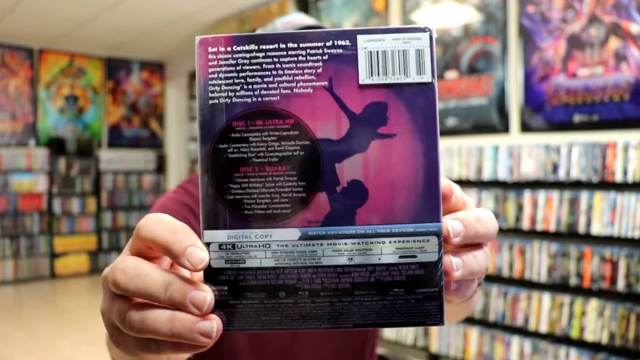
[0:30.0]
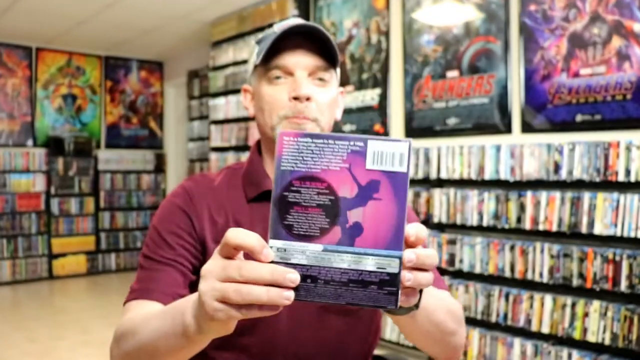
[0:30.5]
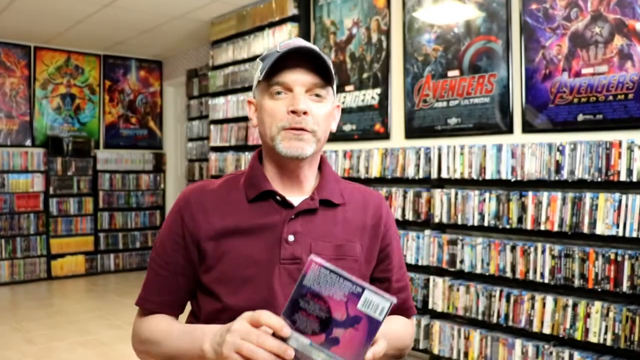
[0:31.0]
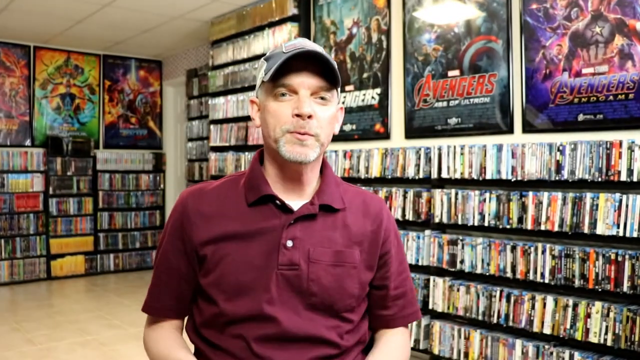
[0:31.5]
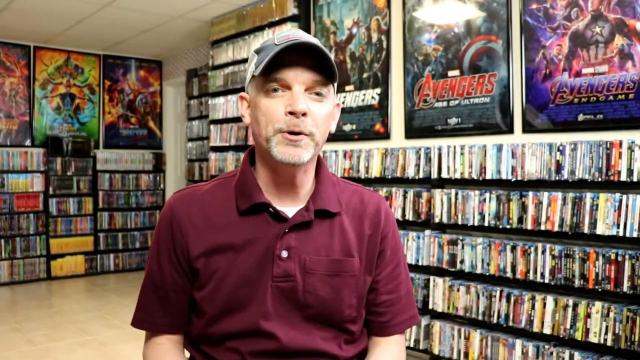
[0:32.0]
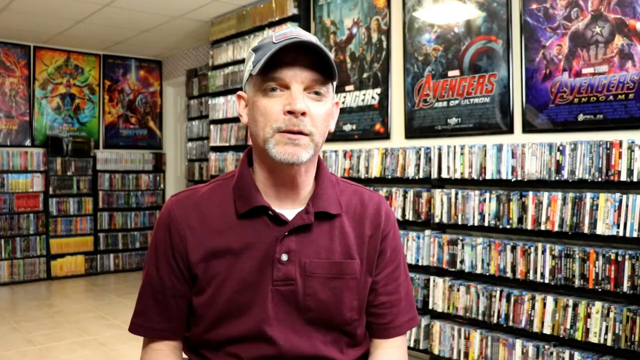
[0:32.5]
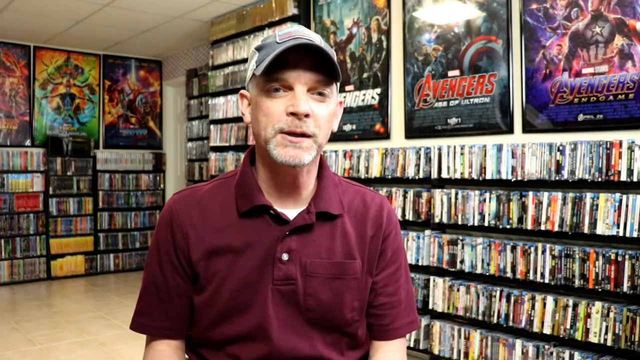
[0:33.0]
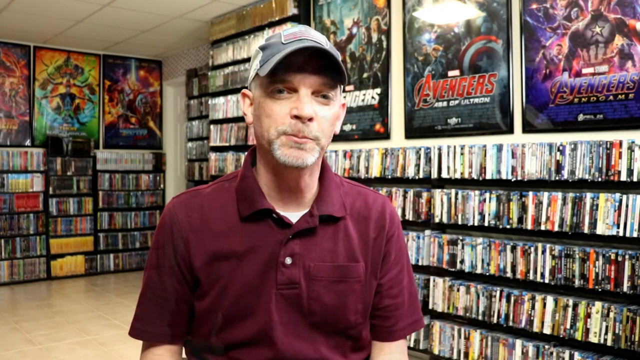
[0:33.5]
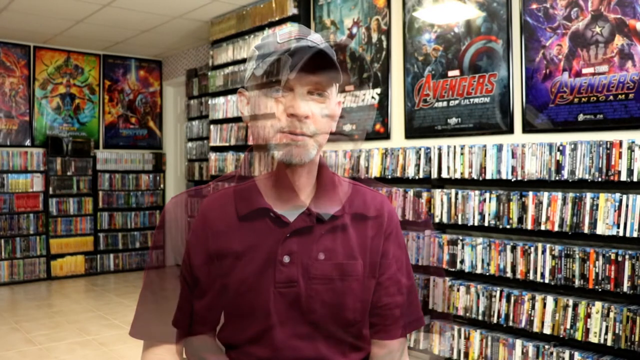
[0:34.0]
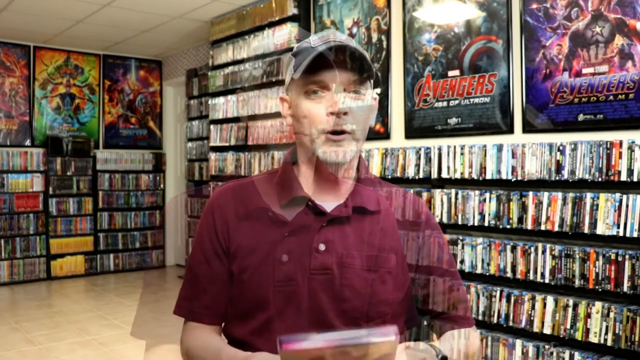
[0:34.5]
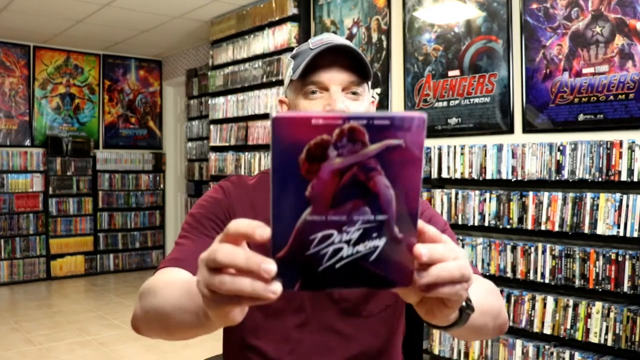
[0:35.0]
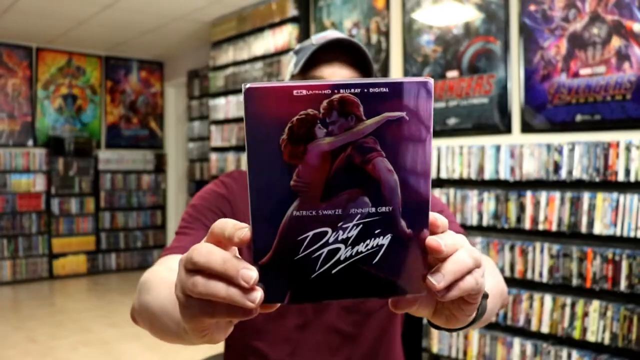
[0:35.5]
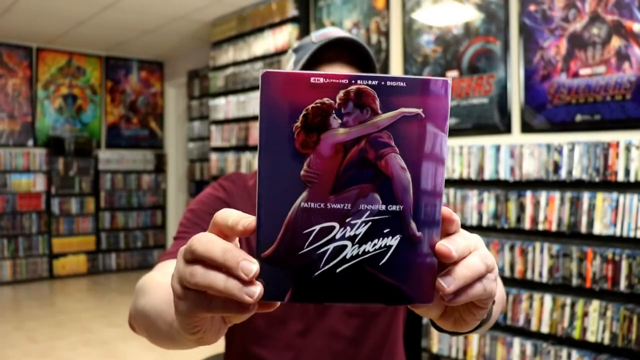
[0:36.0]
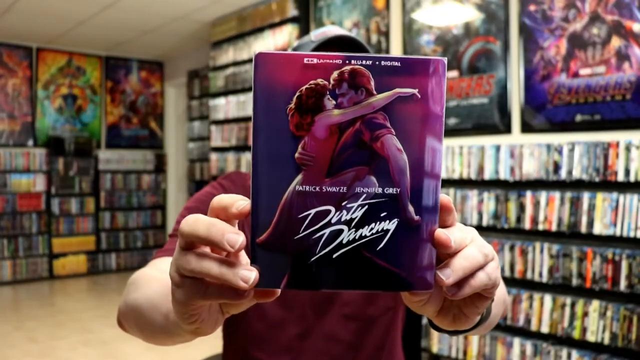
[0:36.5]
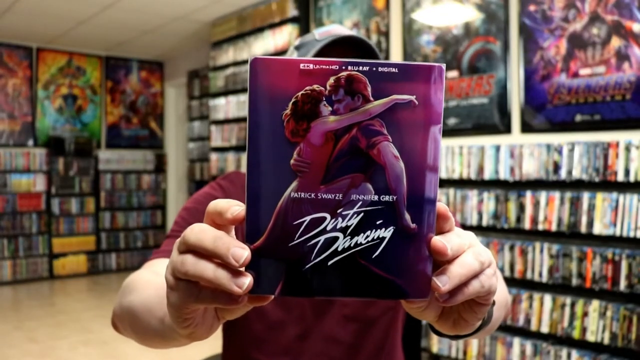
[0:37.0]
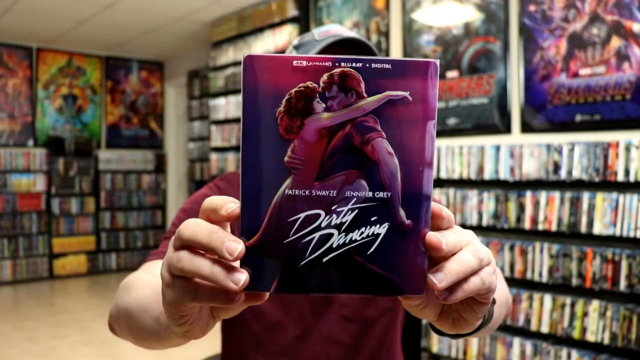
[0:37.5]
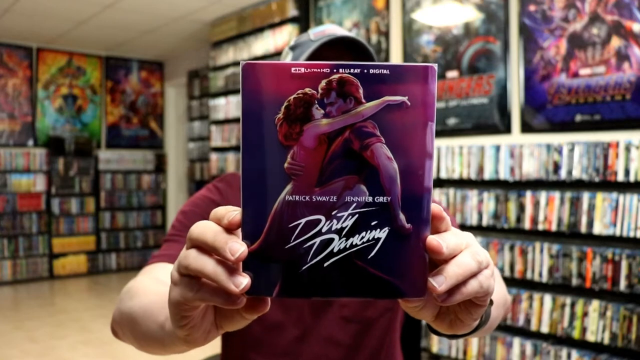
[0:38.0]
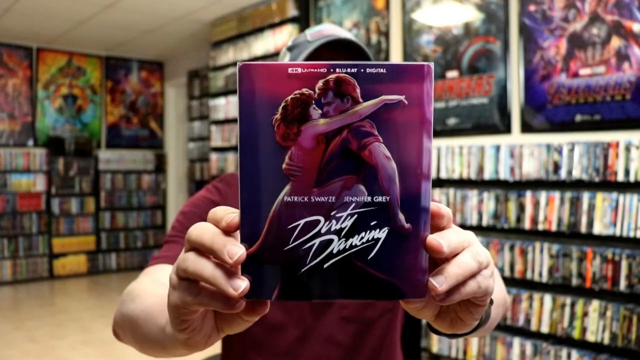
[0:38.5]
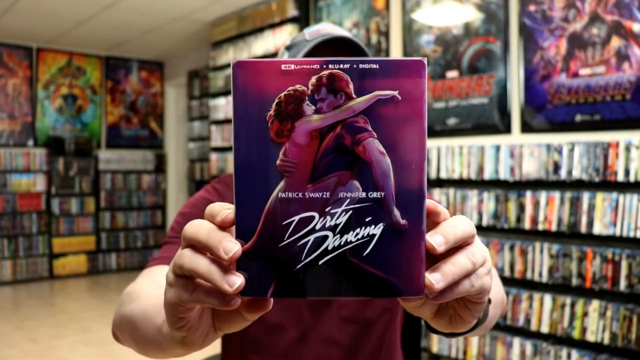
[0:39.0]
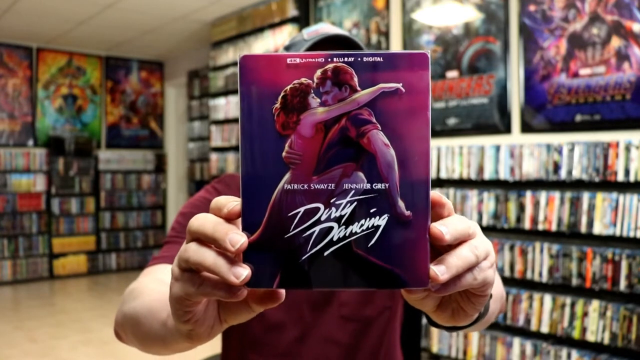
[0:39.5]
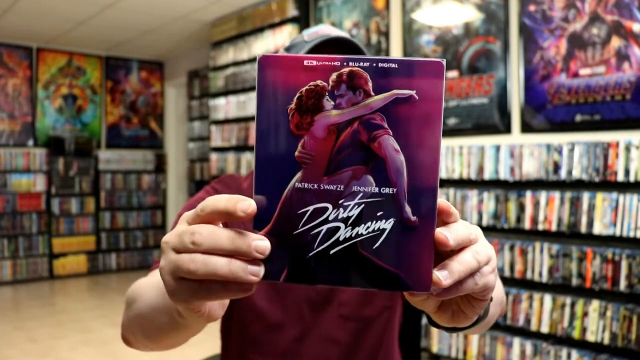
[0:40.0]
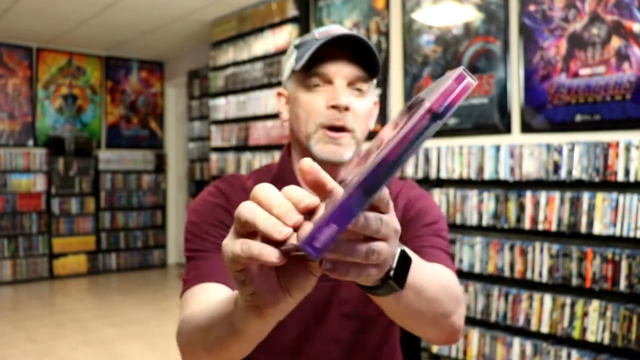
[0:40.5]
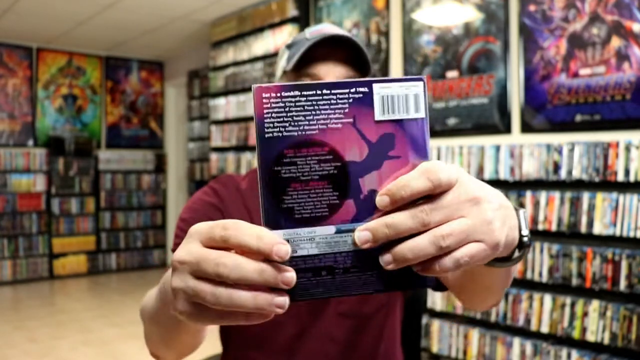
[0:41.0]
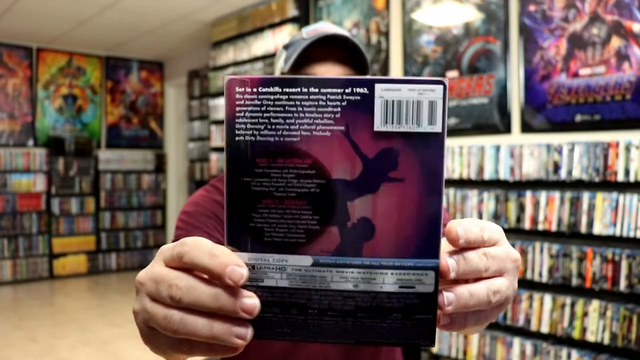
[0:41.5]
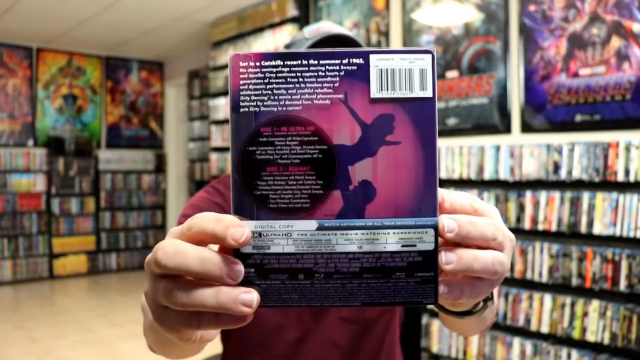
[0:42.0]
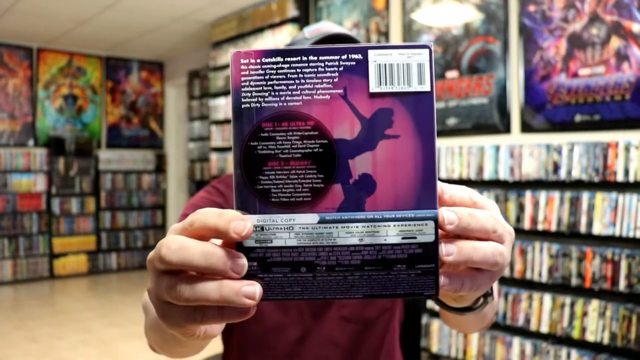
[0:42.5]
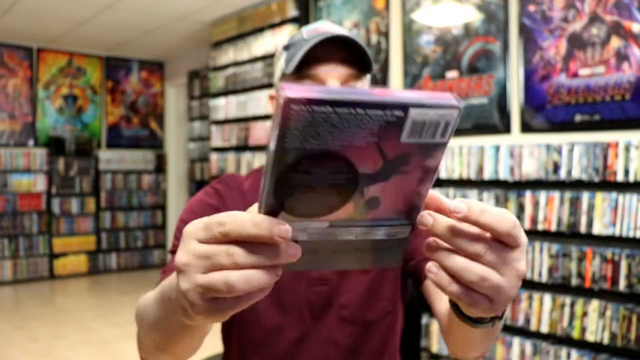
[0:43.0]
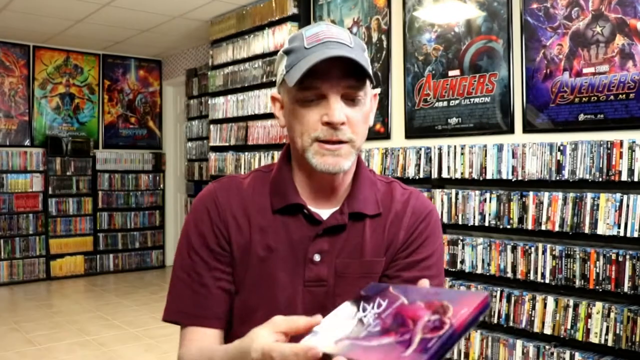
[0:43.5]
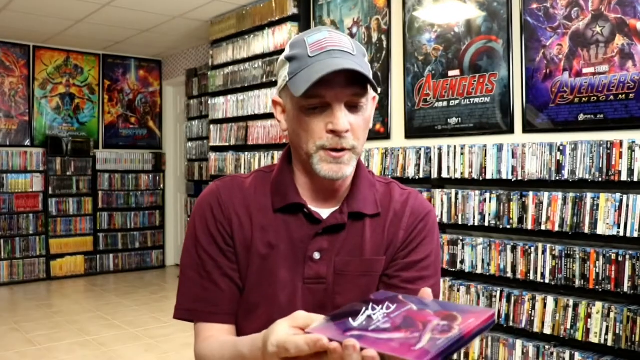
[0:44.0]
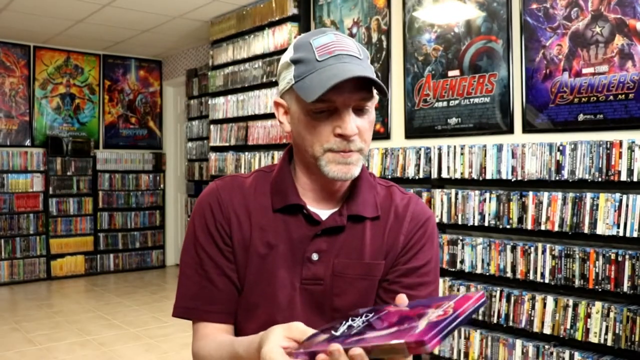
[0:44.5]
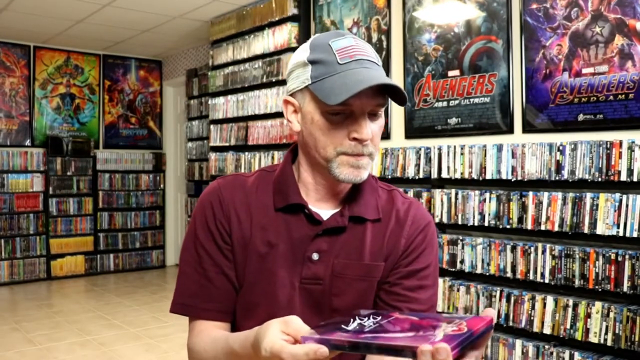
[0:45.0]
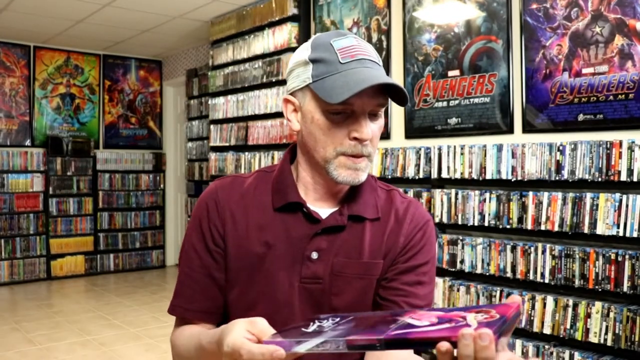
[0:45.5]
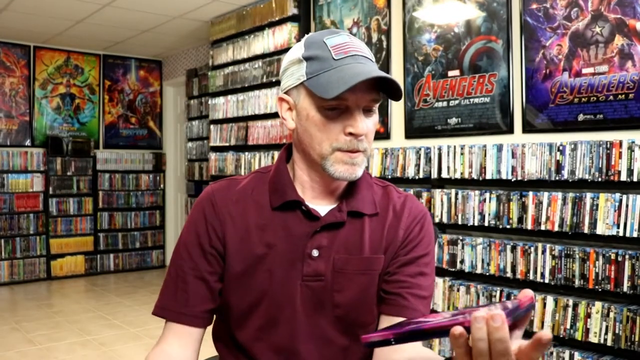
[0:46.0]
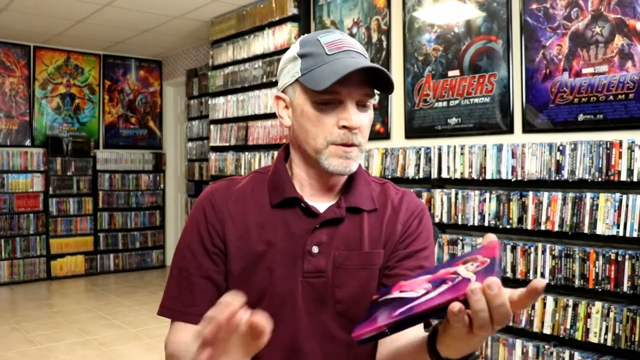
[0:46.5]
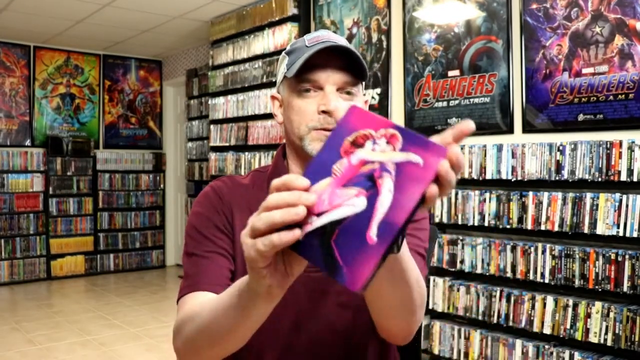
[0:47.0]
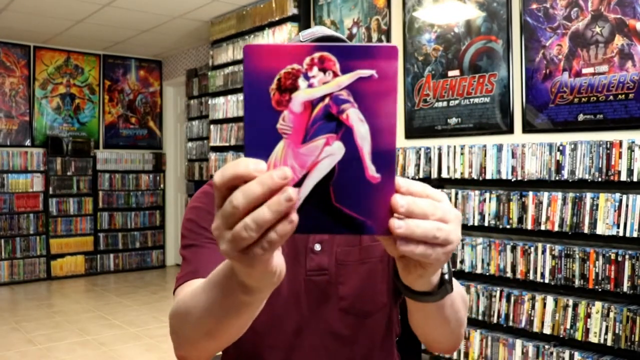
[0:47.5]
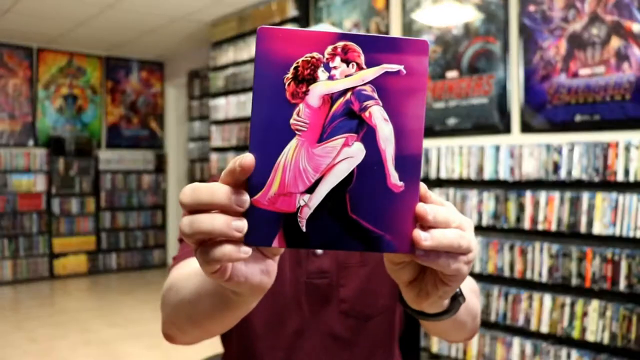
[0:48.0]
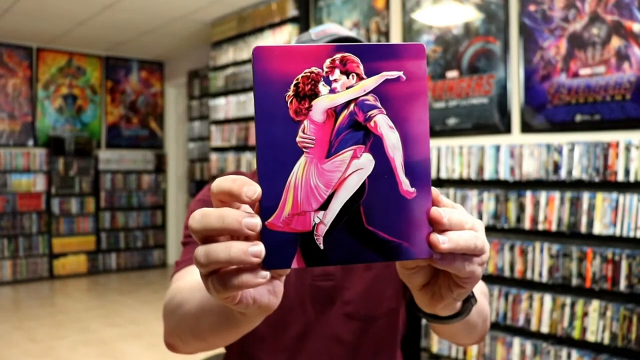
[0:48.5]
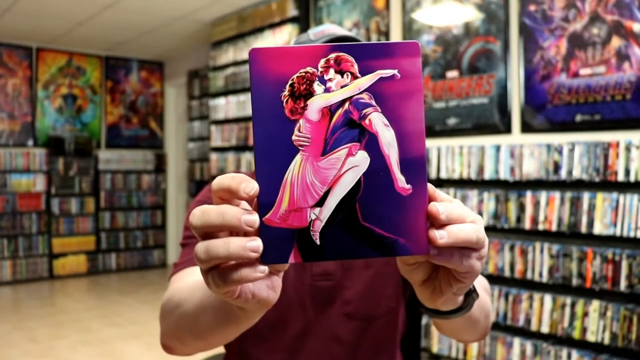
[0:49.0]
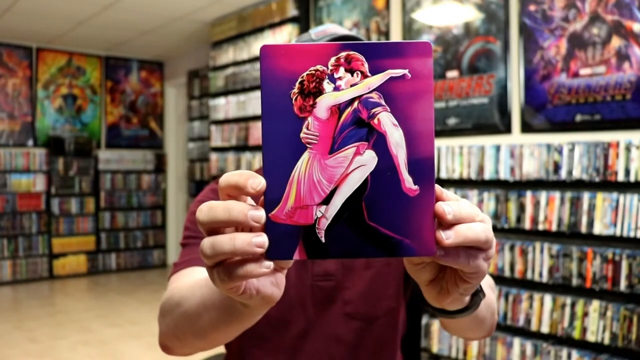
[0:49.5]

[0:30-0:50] The man takes the film out of the camera's view, talks for a couple of seconds, then brings it back up into the center view from the front and rotates it to show the back cover. He seems to take the film out of a special case with art on it; it is unclear whether he opened it off screen and the video cuts to it open, or whether he had another copy. He opens the case, showing the art for the special box edition. The disc is possibly some sort of Blu-ray. The back of the case indicates ultra HD 4K, a special enhanced edition of the film.